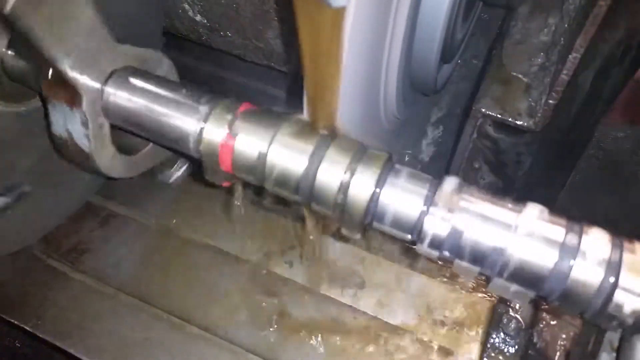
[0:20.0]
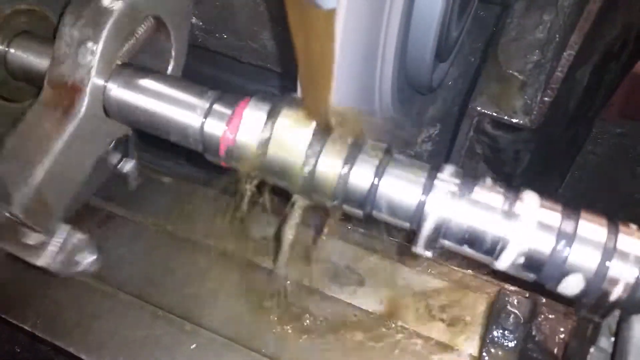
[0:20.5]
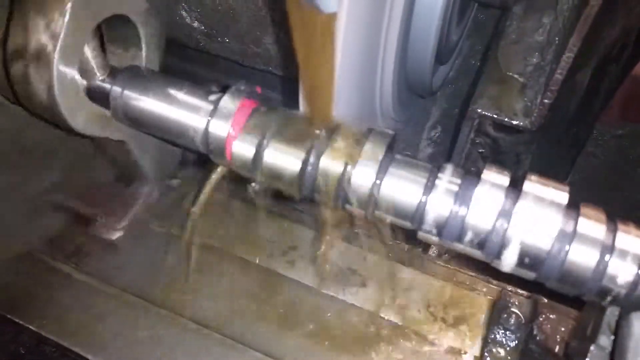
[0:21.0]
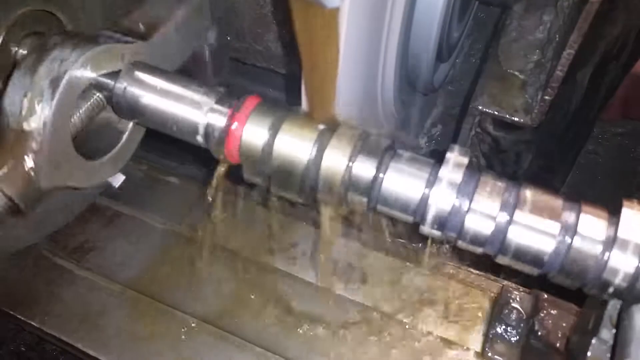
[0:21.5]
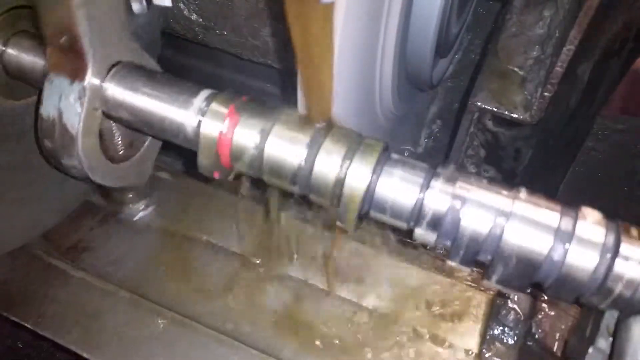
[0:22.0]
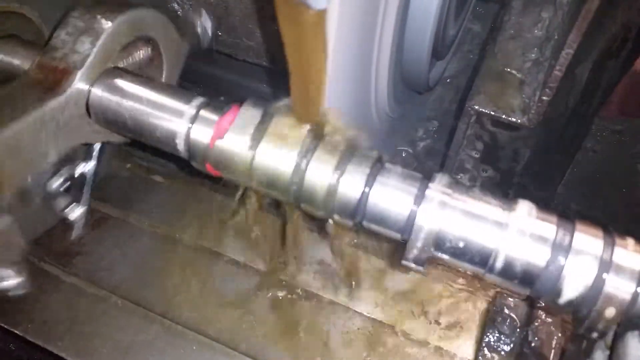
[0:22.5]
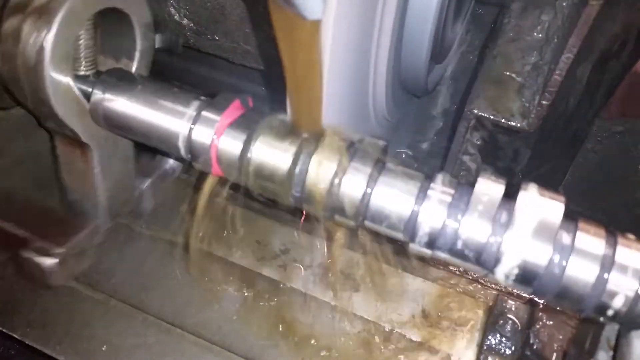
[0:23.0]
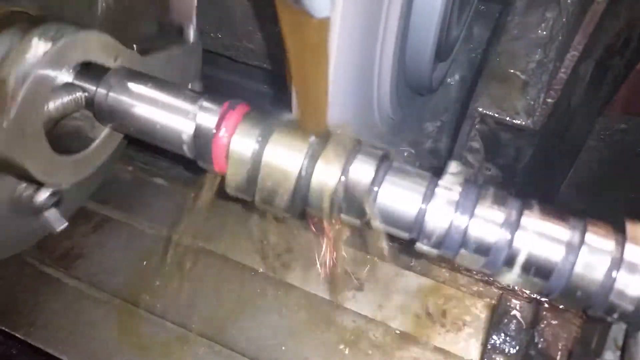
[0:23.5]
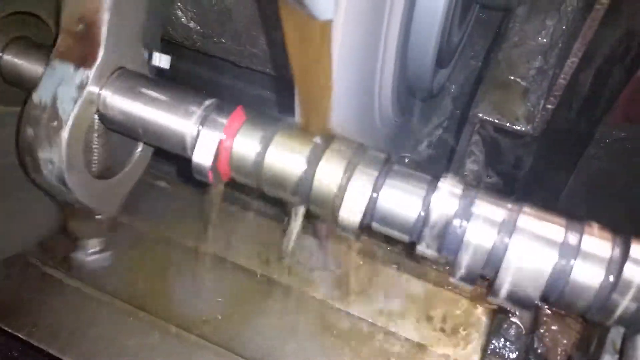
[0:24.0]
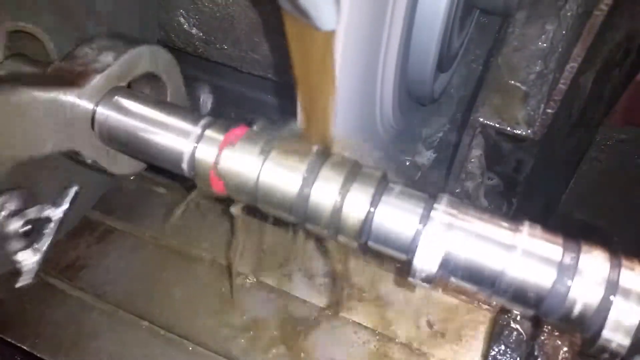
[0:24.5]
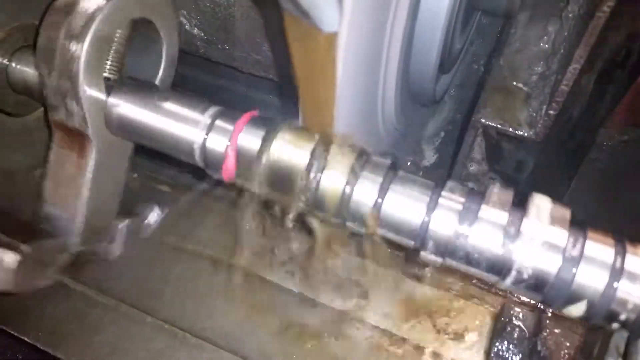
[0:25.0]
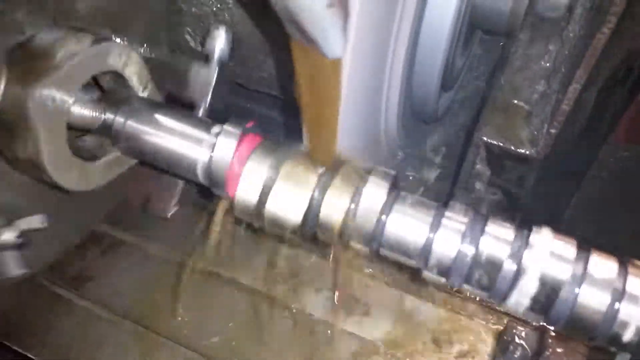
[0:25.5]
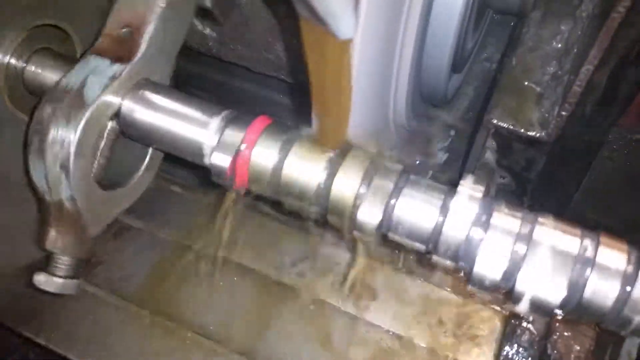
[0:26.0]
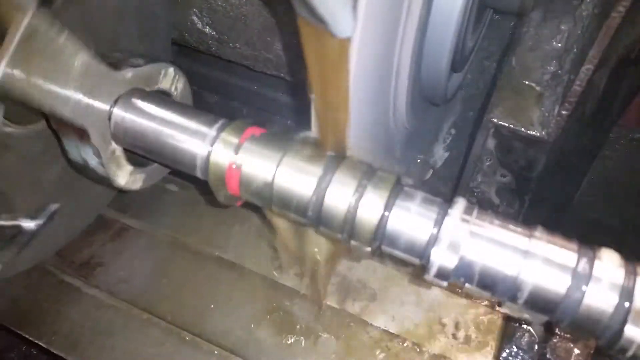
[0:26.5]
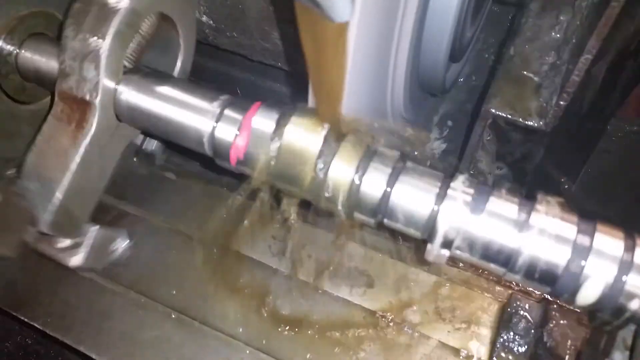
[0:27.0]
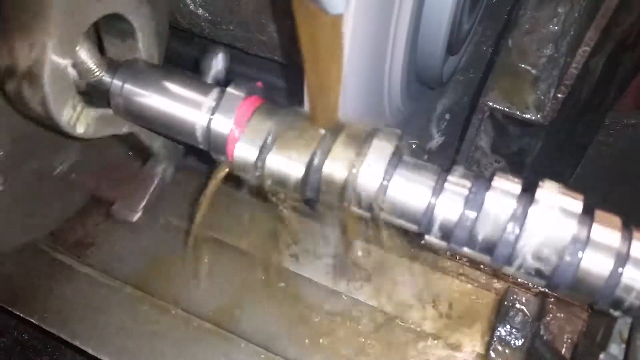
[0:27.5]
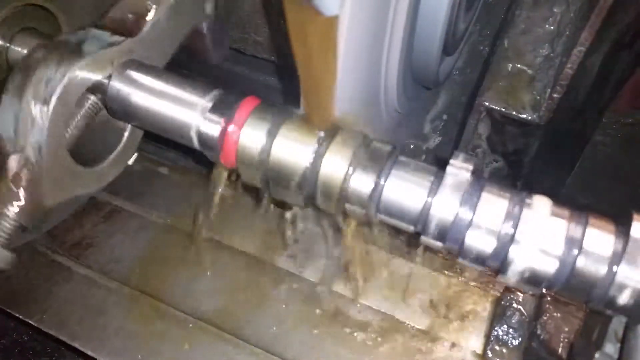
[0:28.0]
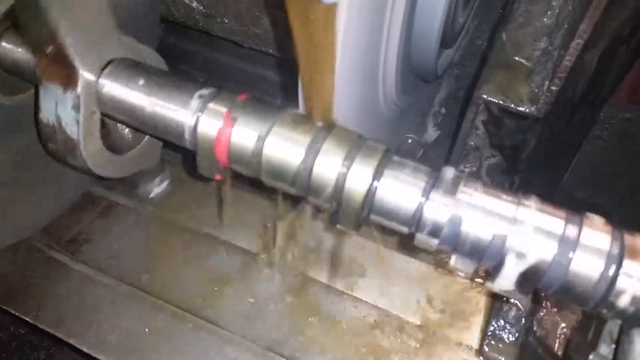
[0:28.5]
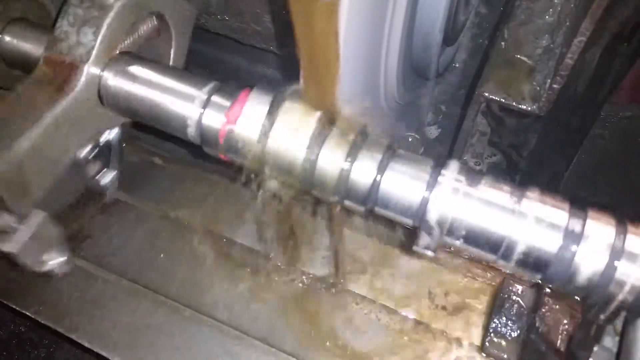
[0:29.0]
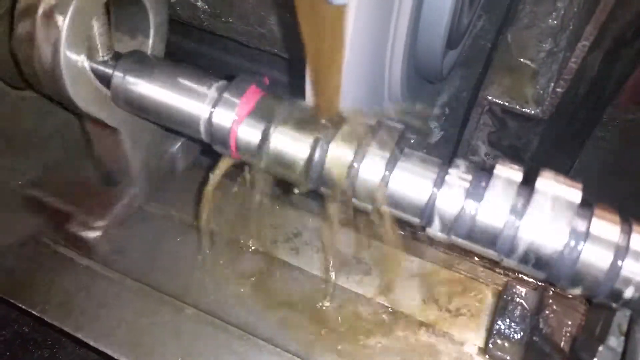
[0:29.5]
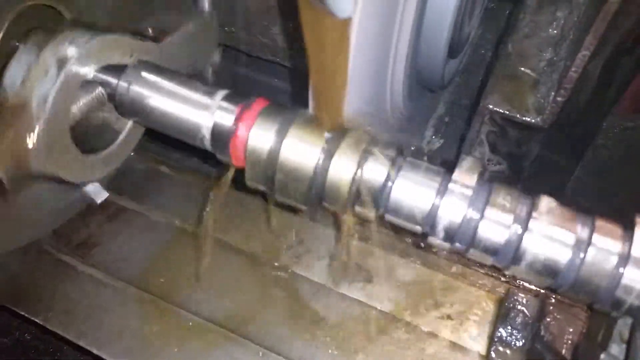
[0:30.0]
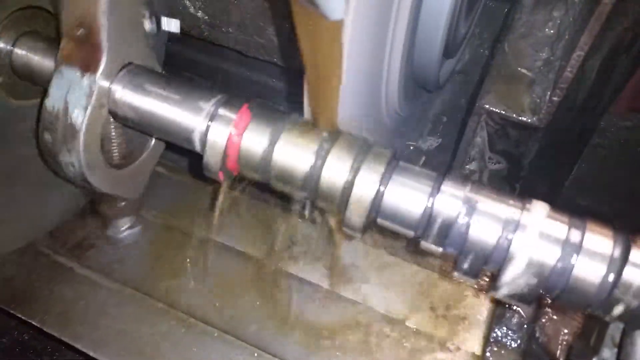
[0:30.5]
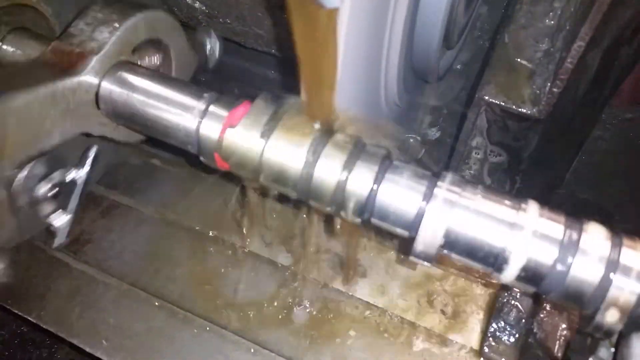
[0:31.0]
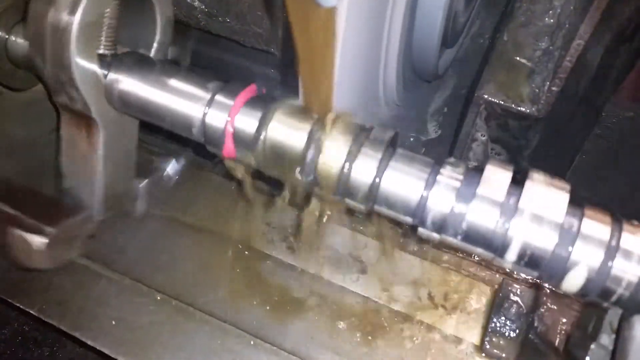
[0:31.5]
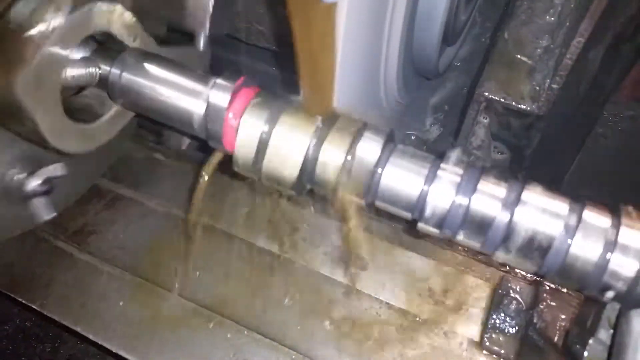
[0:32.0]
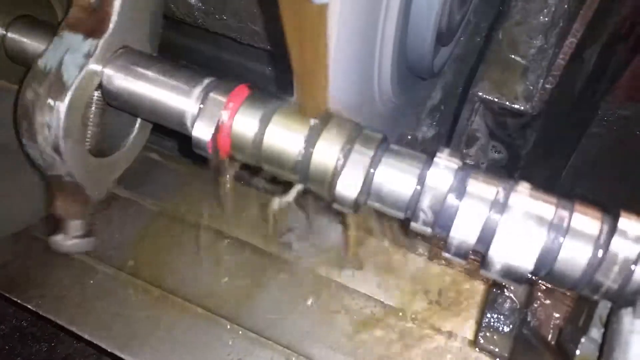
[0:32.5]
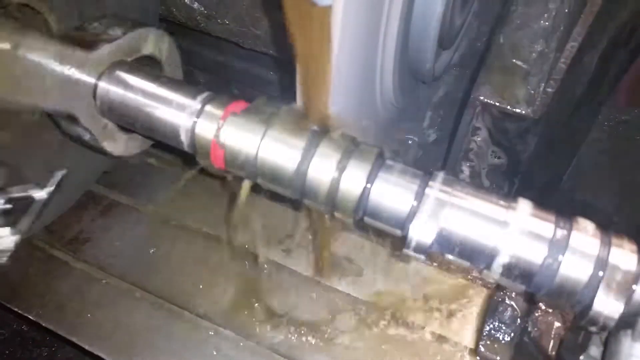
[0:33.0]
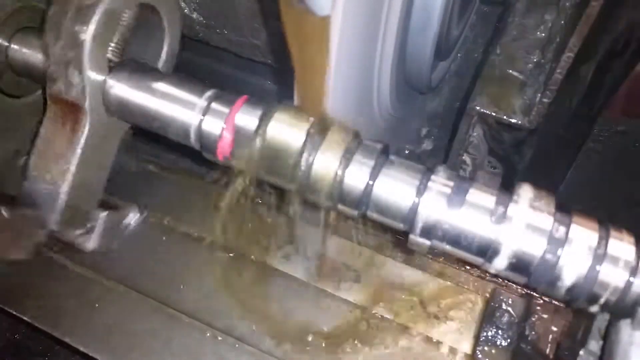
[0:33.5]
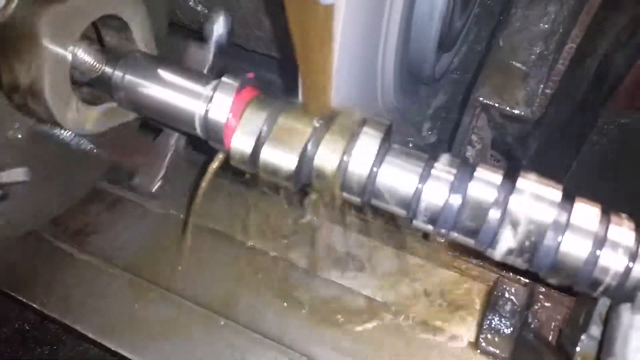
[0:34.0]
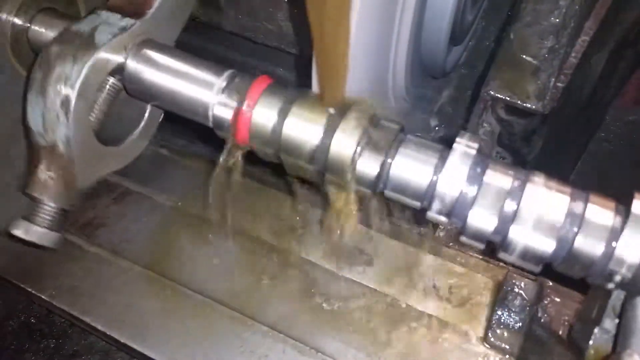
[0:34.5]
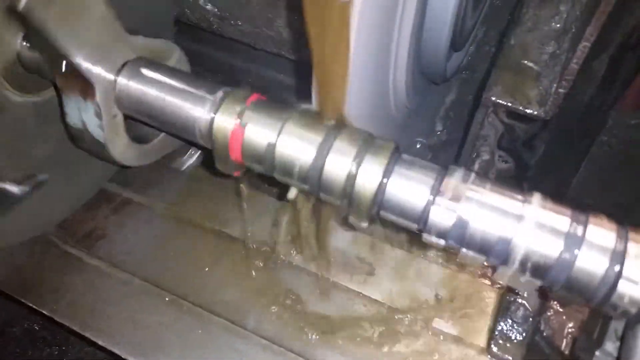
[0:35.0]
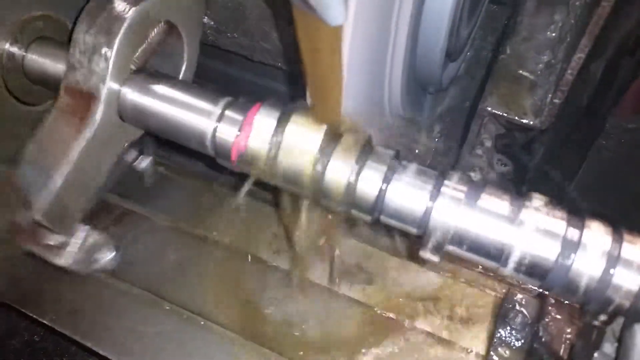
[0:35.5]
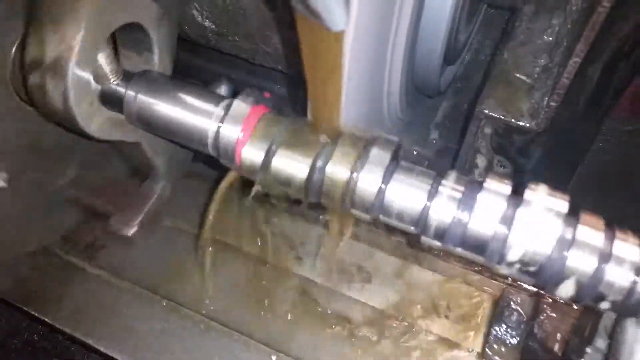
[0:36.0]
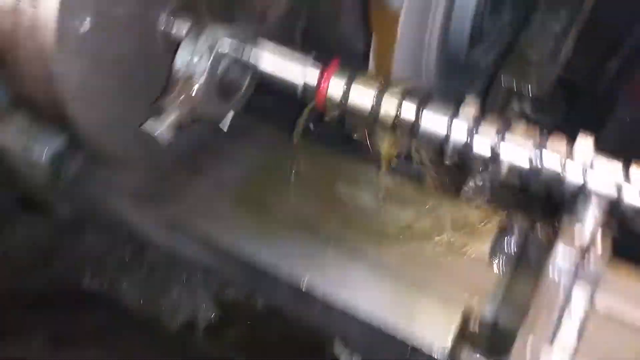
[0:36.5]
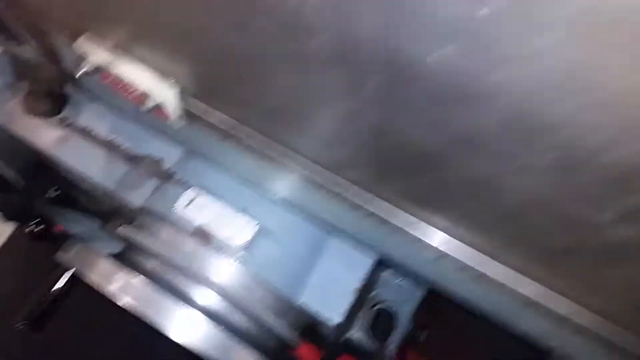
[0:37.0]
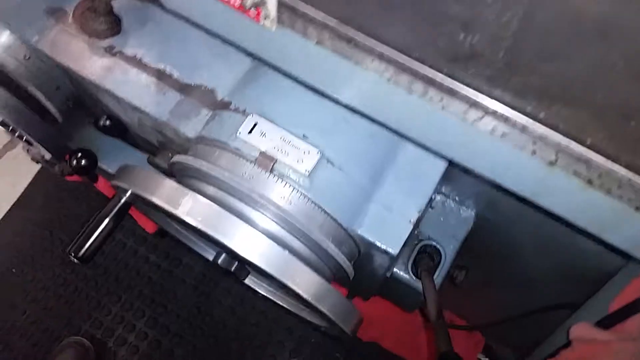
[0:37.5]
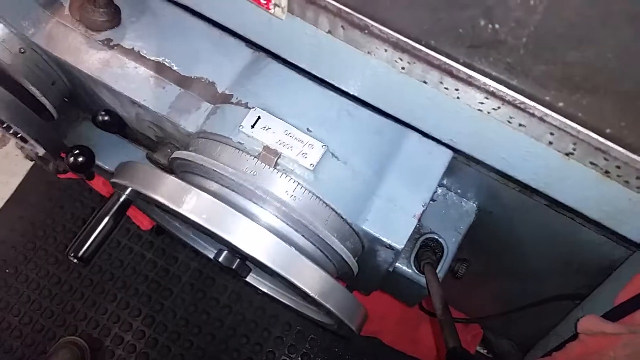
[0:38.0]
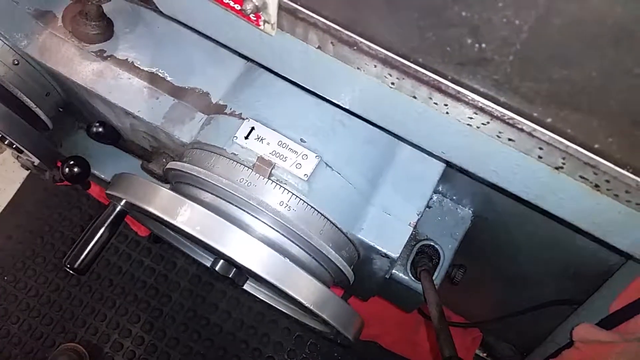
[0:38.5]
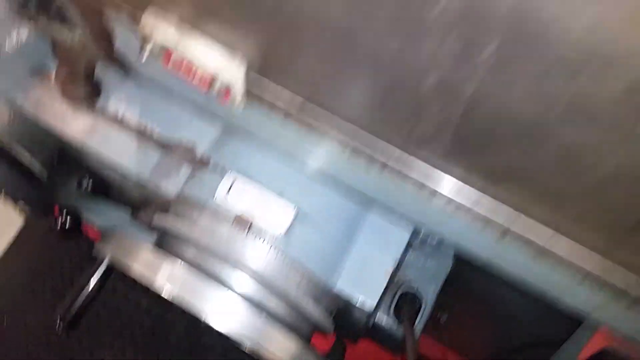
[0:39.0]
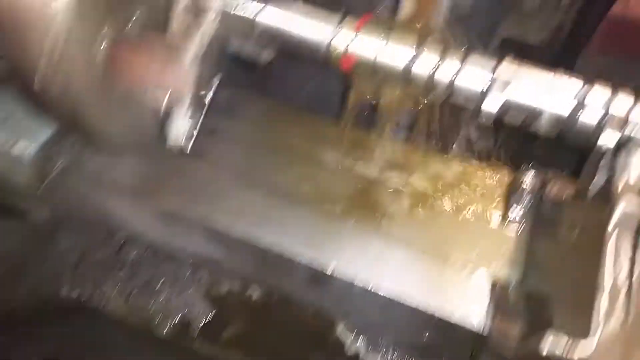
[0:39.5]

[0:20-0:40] The machine's movement differs from before. Something is happening in one area, and another thing is taking place down below in the same view. Friction is visible where the parts move. Some areas of the machine look very dead and in need of a strong, proper service.